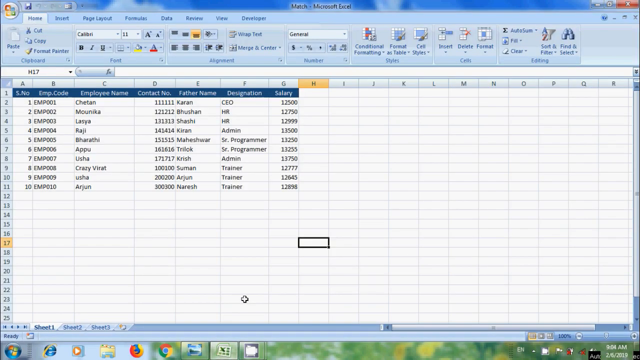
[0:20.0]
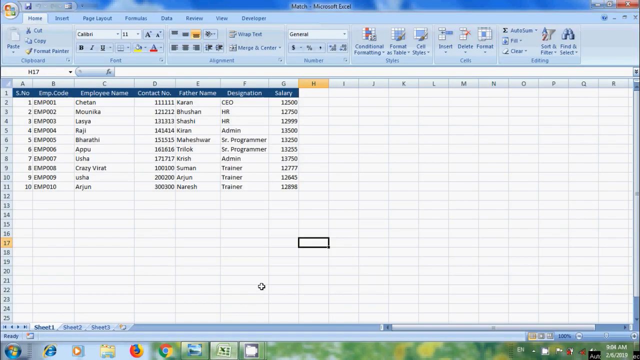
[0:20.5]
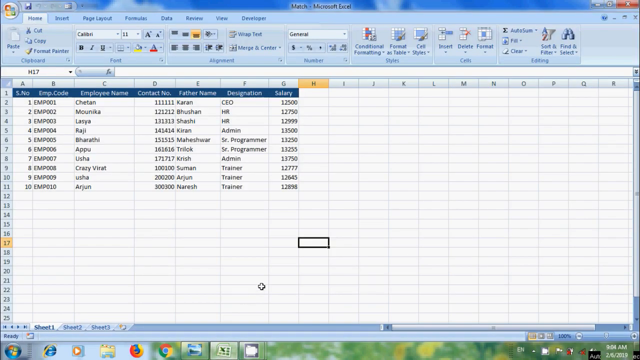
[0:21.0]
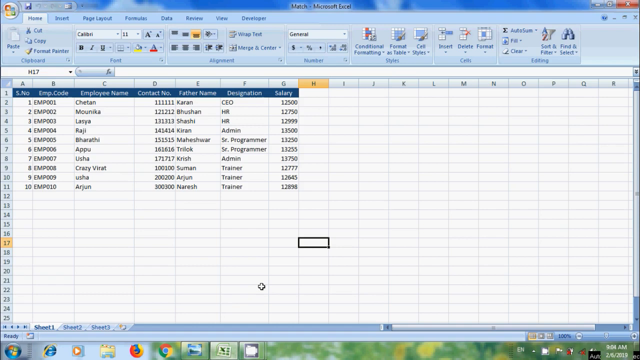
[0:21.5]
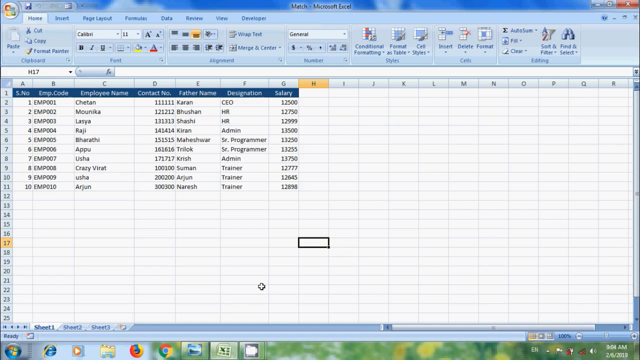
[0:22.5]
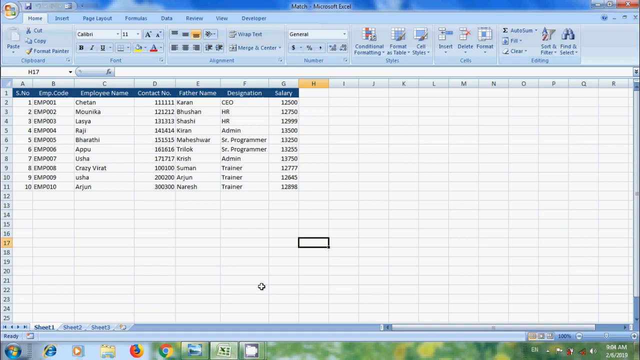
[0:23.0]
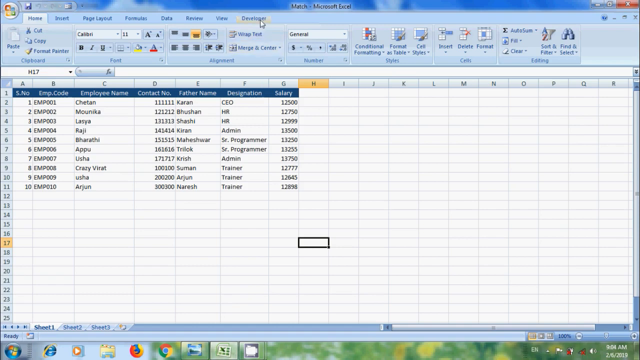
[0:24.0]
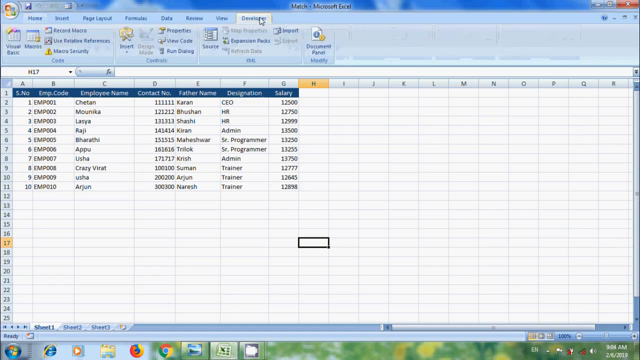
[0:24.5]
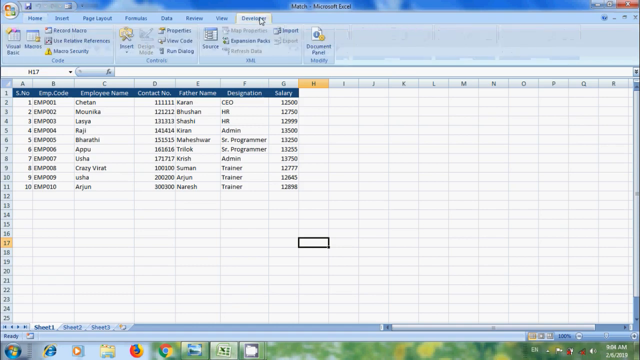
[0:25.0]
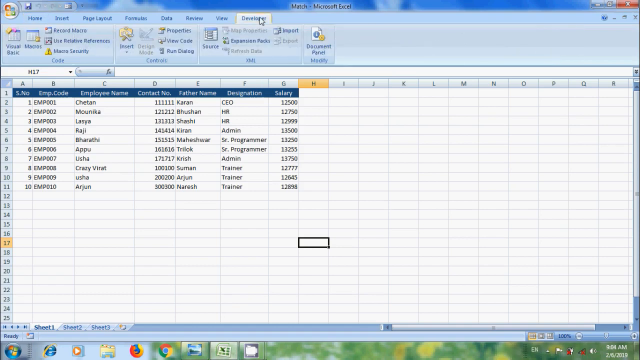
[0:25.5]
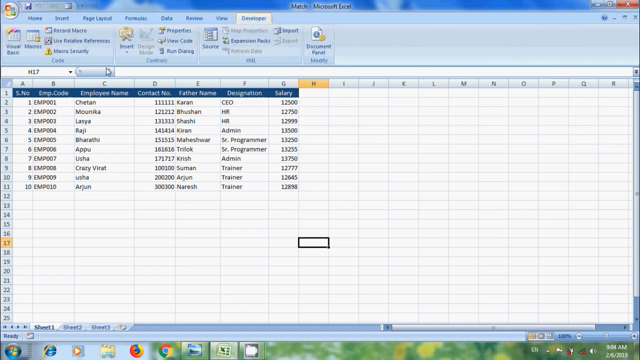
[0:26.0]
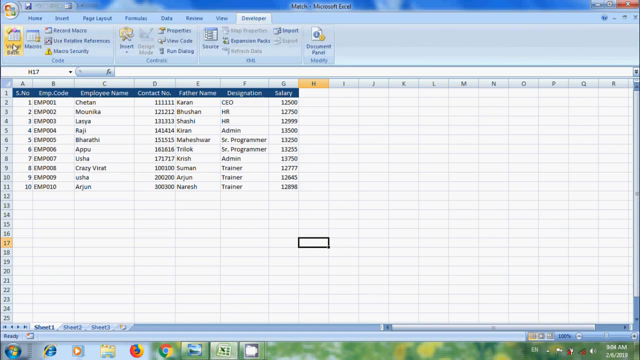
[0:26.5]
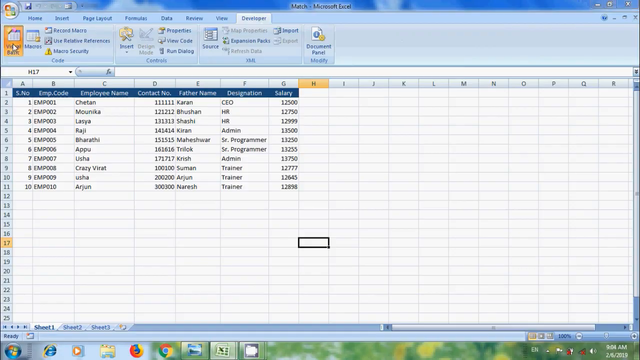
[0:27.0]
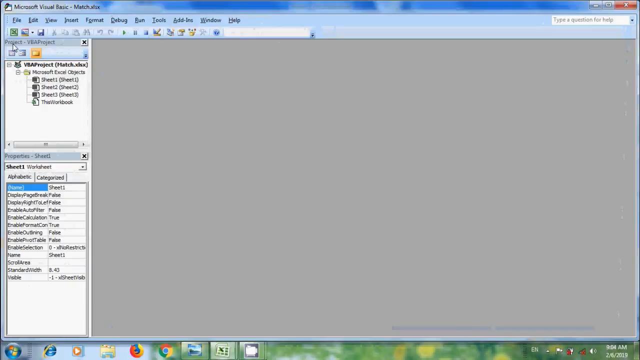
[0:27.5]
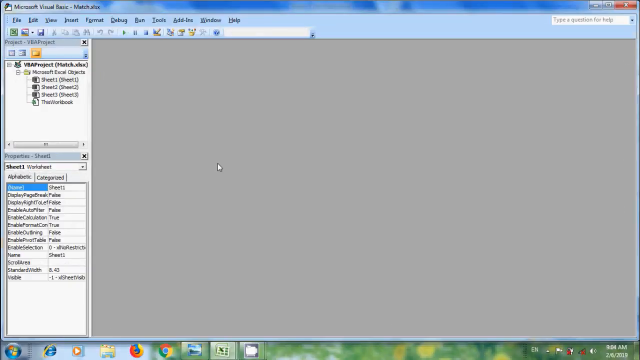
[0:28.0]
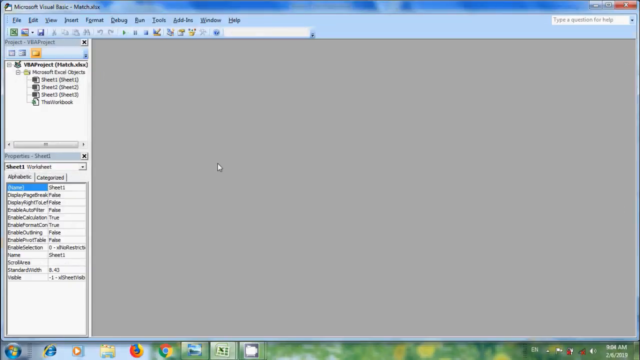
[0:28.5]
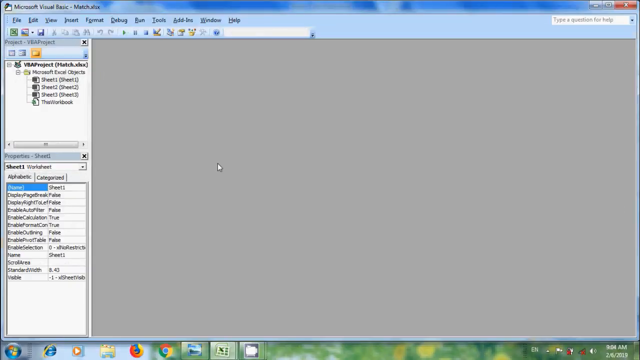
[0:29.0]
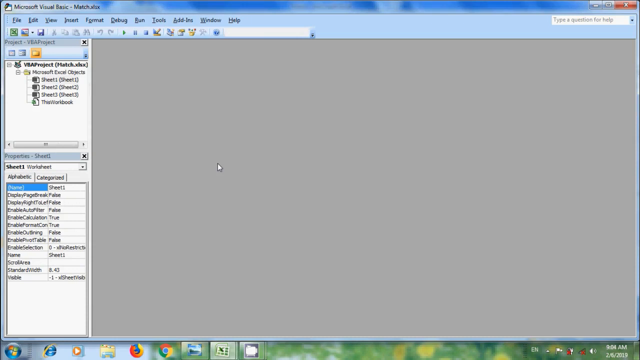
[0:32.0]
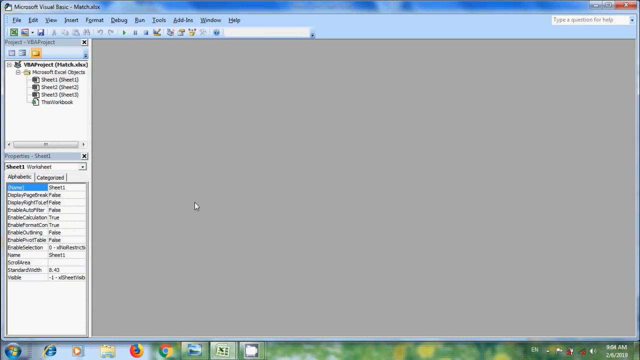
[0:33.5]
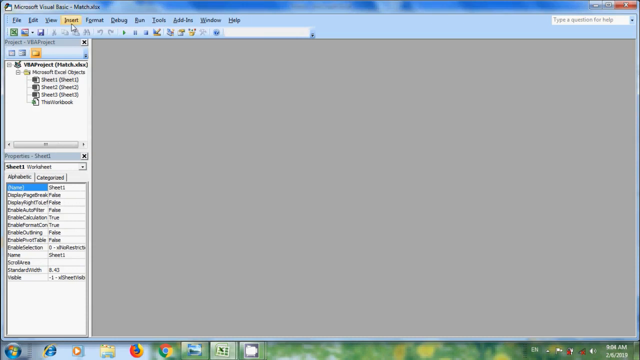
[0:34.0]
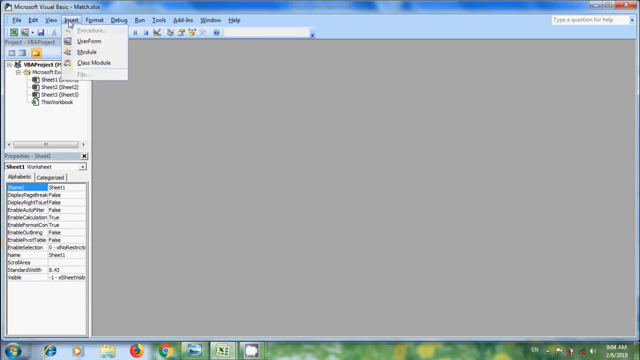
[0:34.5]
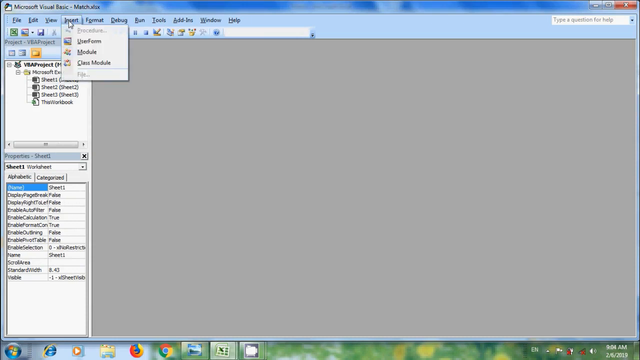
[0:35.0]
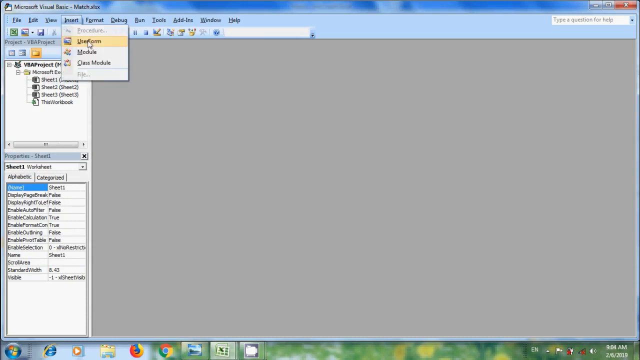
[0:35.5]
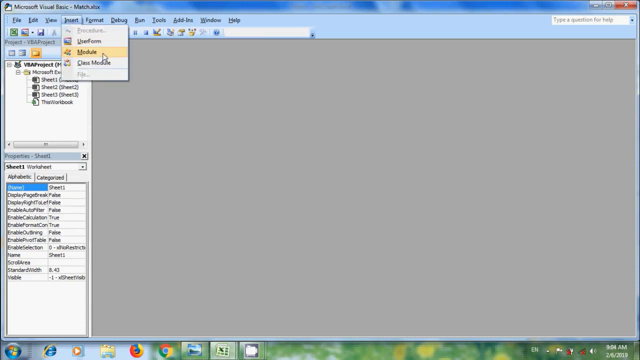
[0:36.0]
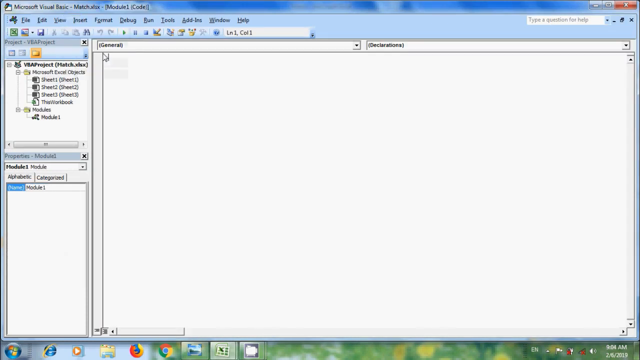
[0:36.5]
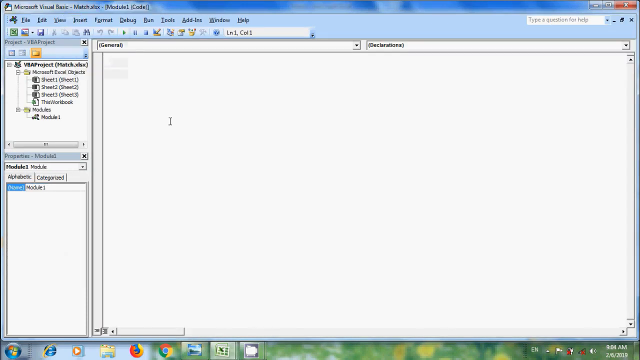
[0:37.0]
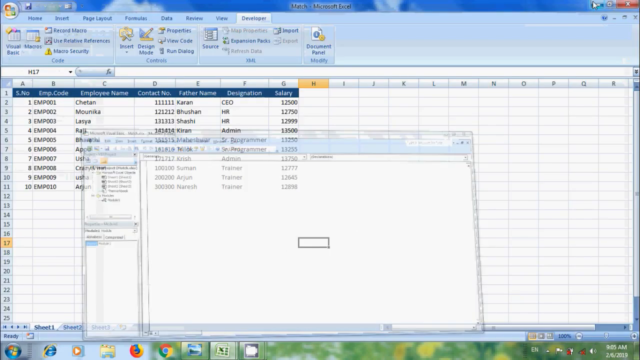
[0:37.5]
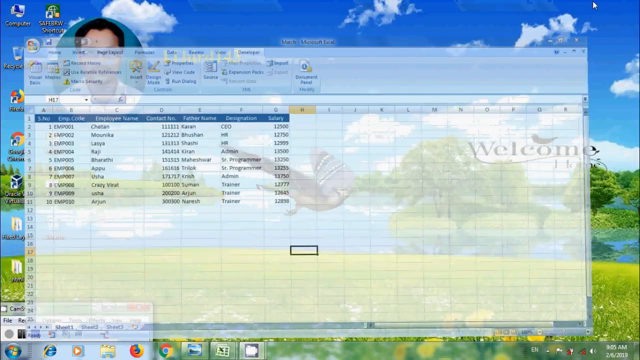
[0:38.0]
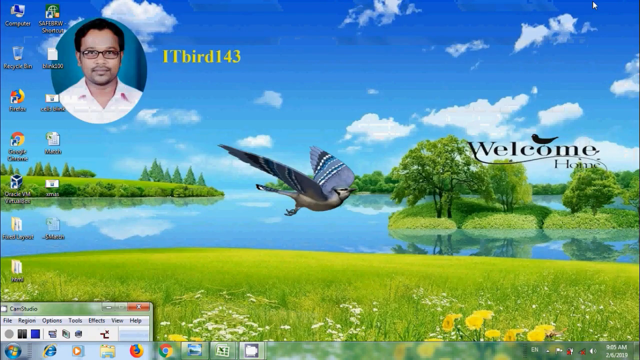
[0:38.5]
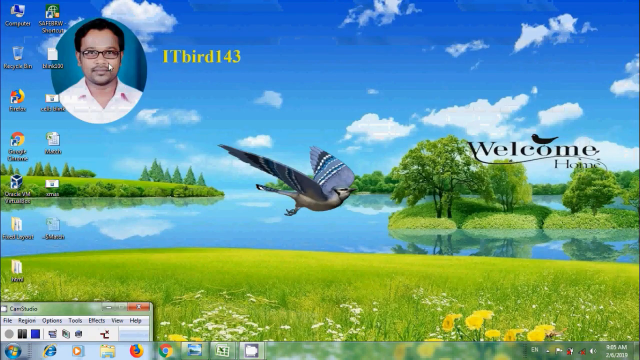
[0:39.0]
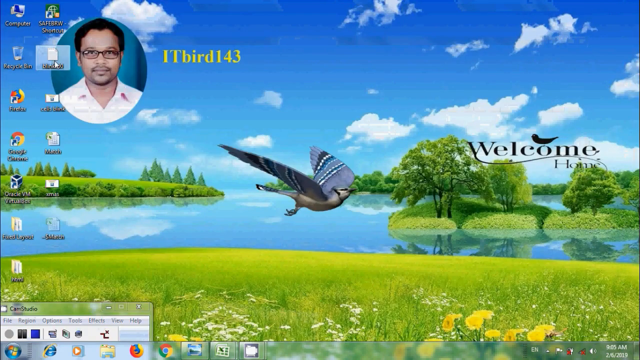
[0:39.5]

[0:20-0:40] An Excel sheet shows six headings and ten columns of employee information, including names, contact number, father name, designation and salary. The names include Cheetah, Monica, Lasya, Raji, Asha and Arjun, among others, and the designations include administration, CEO, senior programmer and trainer. The user goes to Developer, opens Microsoft Visual Basic and goes to insert module.